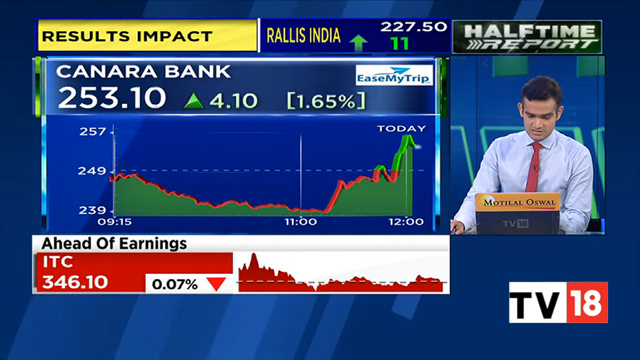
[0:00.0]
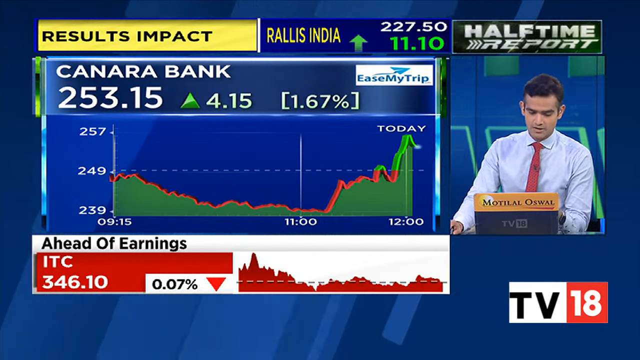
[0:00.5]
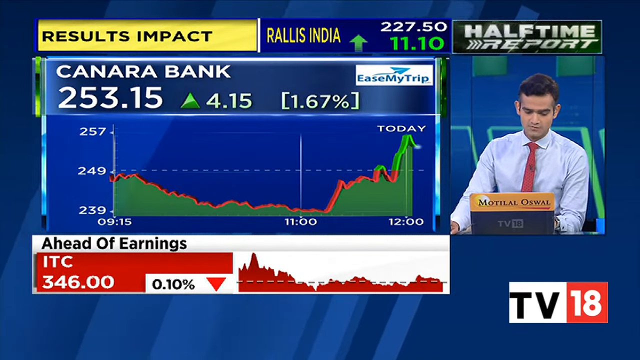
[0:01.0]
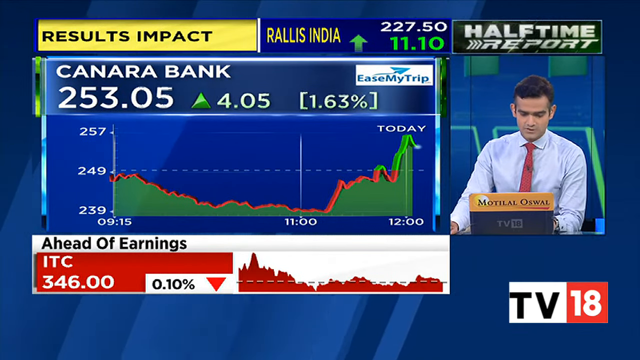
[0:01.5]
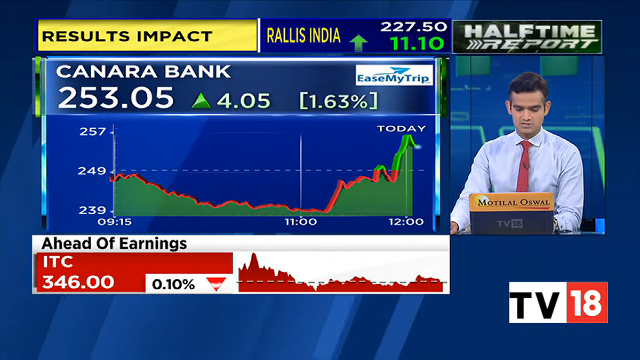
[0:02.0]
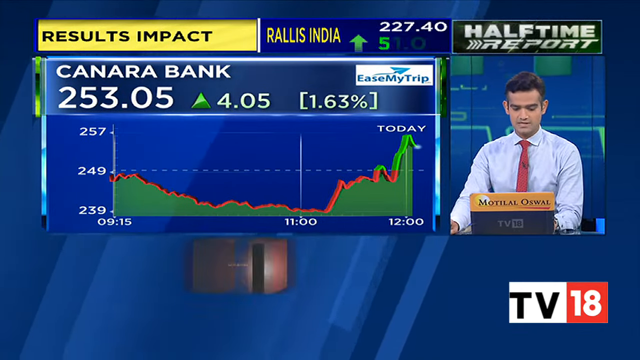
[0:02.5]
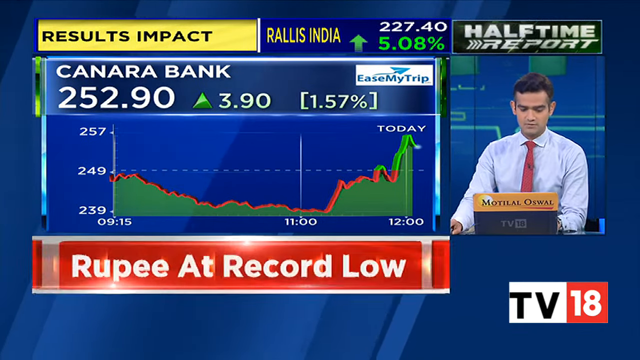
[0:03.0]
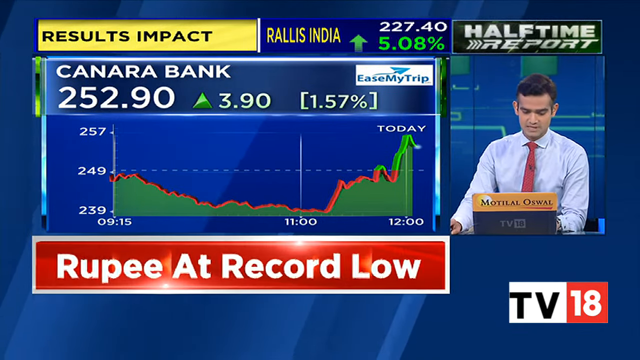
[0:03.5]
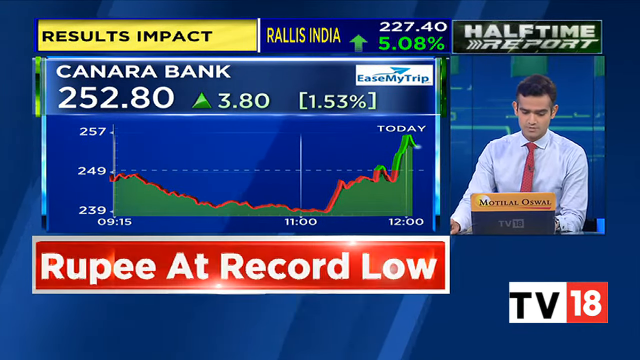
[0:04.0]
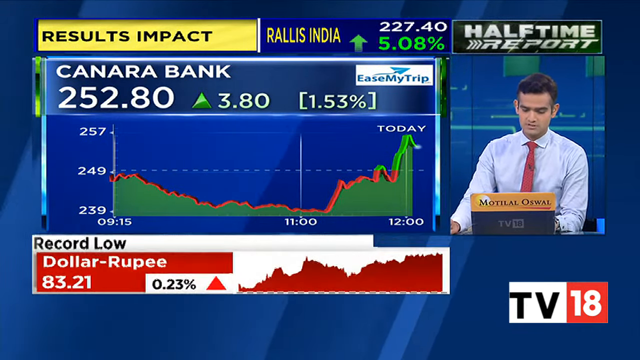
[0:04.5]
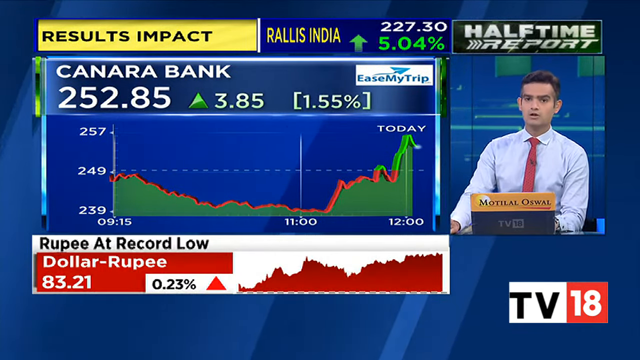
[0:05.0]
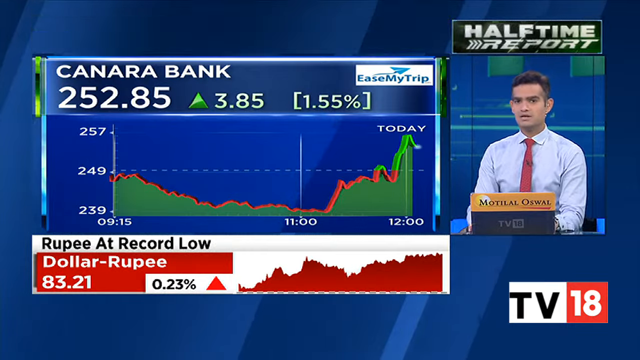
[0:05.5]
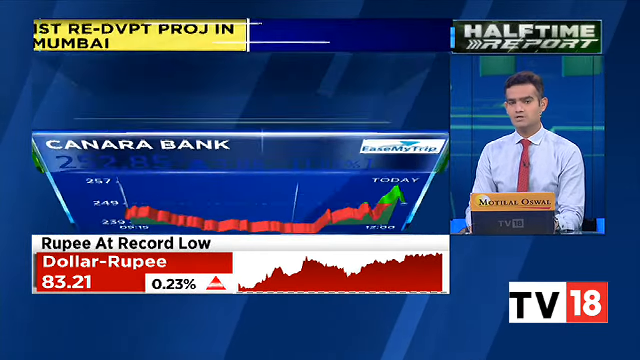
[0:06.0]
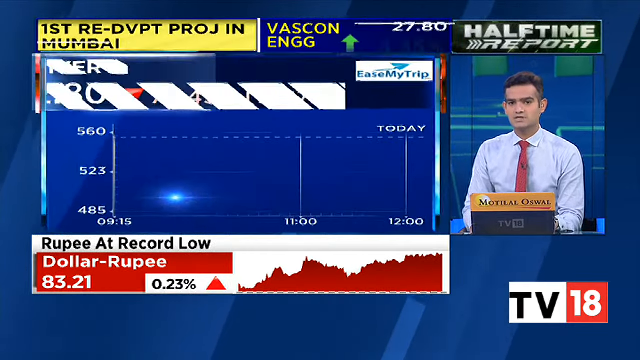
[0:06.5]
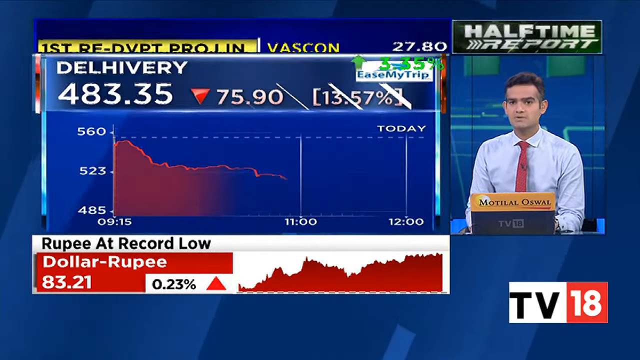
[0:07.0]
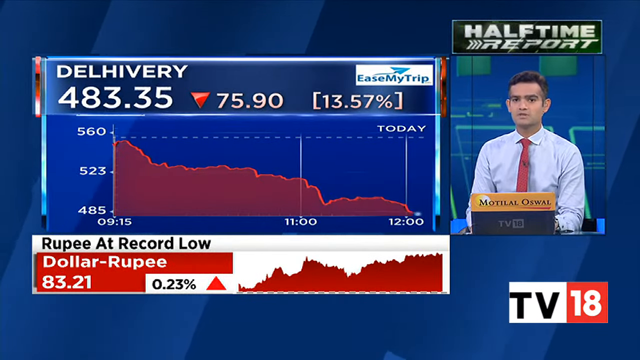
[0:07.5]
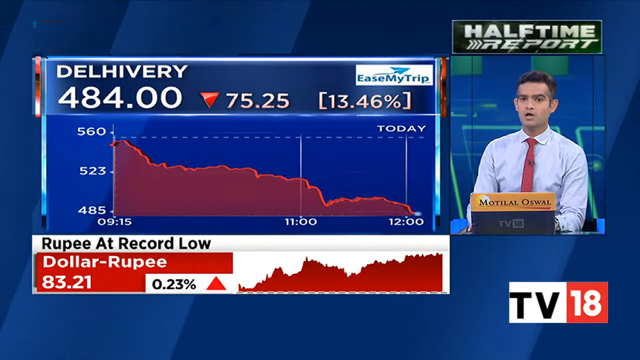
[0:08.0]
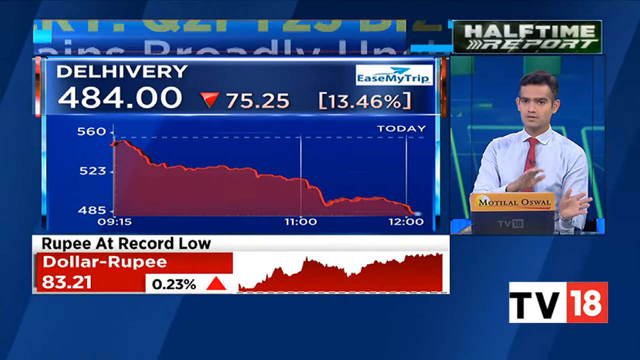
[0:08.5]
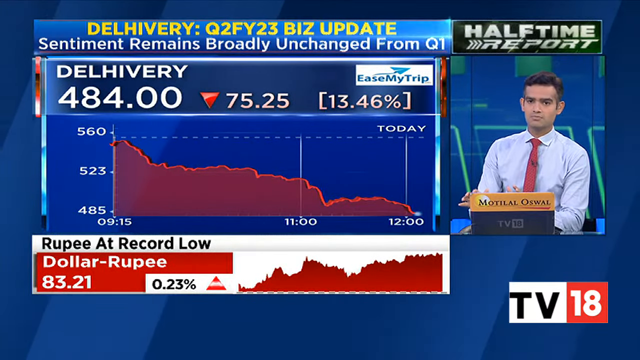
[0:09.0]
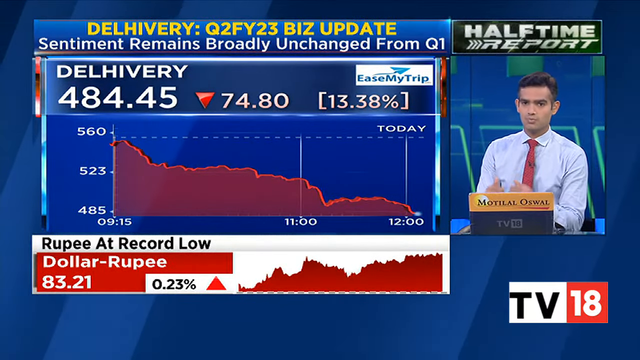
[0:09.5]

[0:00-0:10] What appears to be a stock report shows a man with dark hair on the right, wearing a blue shirt and a red tie. He is monitoring the Canara Bank stock as it jumps above its previous day's close, and various metrics are displayed, including "results impact" and how the stock is increasing. Canara Bank is up four dollars and five cents, or 1.63%, and the stock's change is shown in real time. A different stock, delivery, is then shown, which is not doing as well, followed by the stock ITC being ahead of earnings, with a red banner at the bottom.